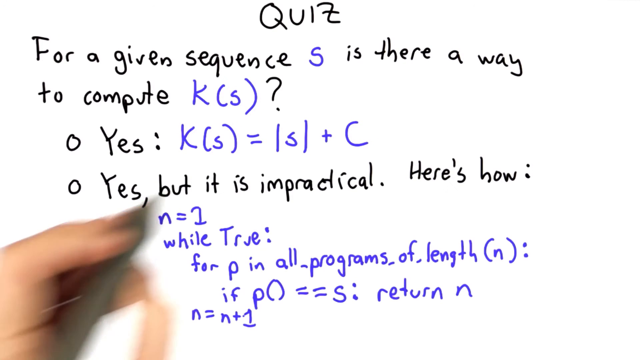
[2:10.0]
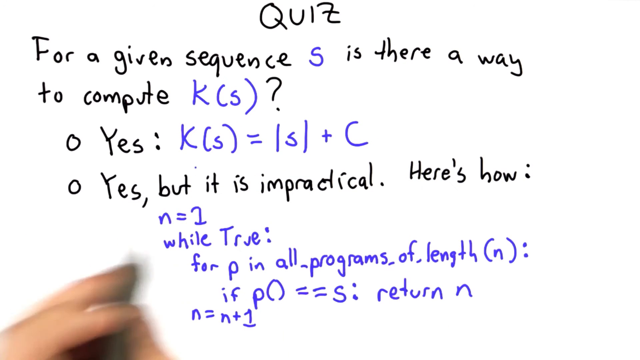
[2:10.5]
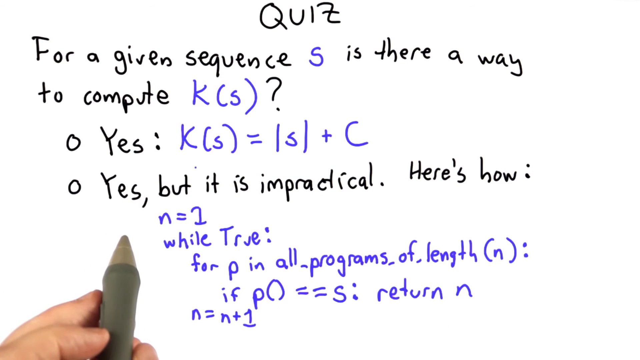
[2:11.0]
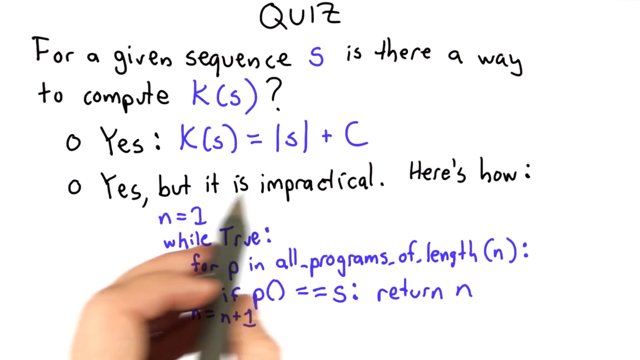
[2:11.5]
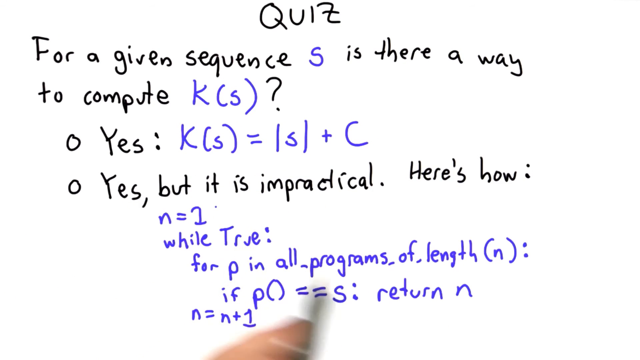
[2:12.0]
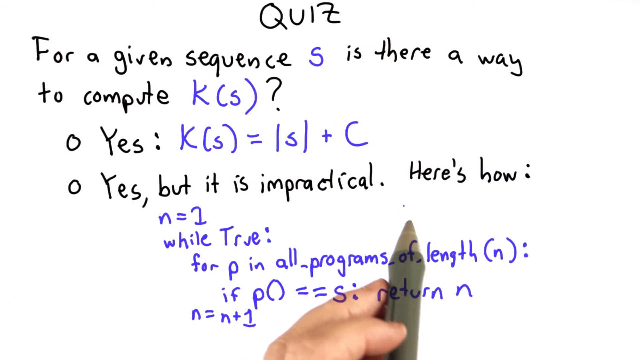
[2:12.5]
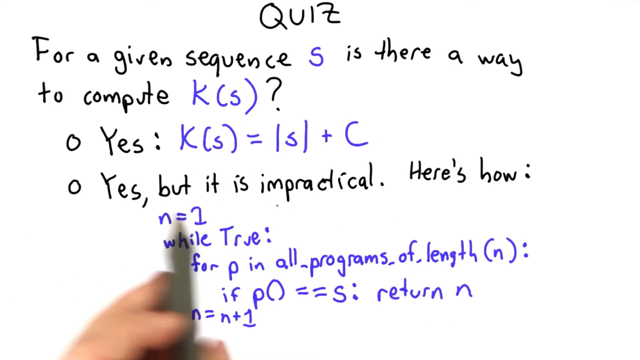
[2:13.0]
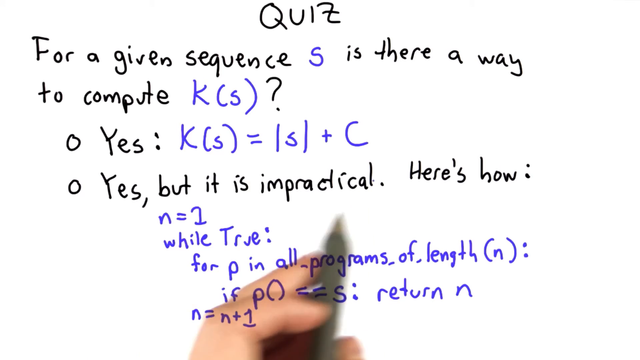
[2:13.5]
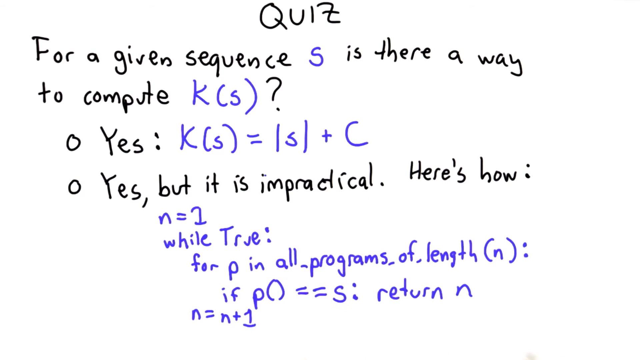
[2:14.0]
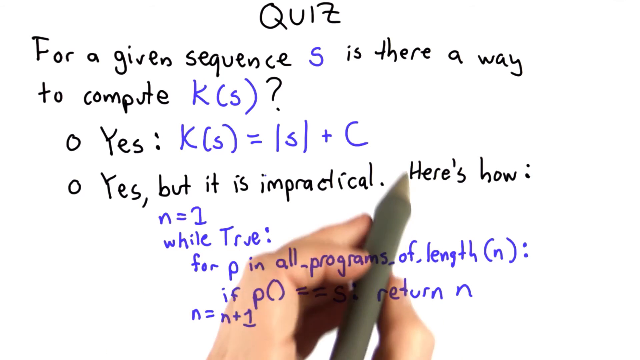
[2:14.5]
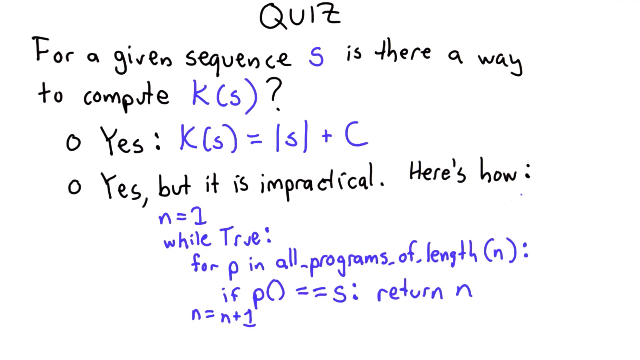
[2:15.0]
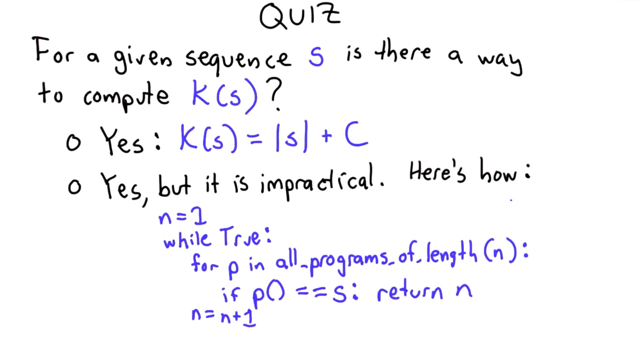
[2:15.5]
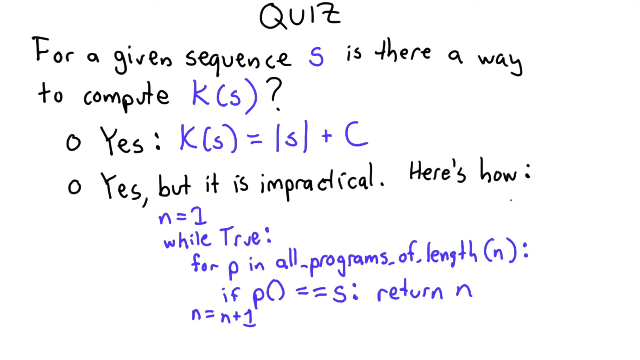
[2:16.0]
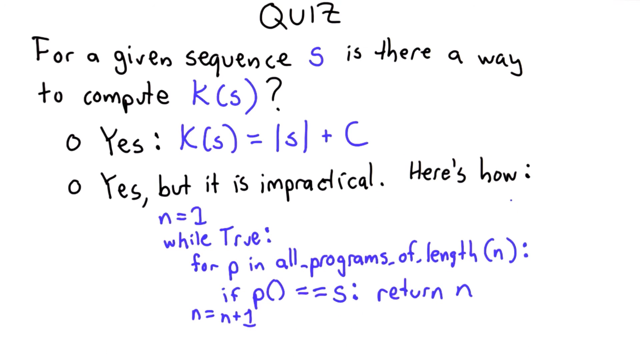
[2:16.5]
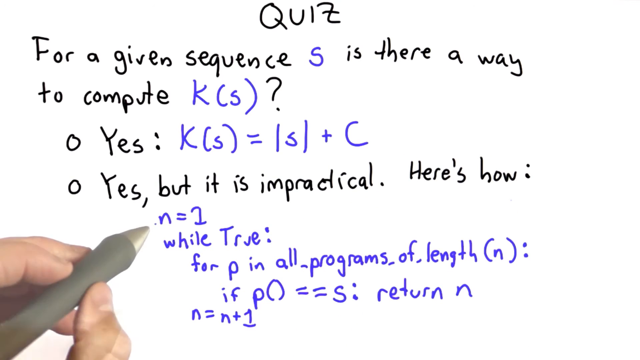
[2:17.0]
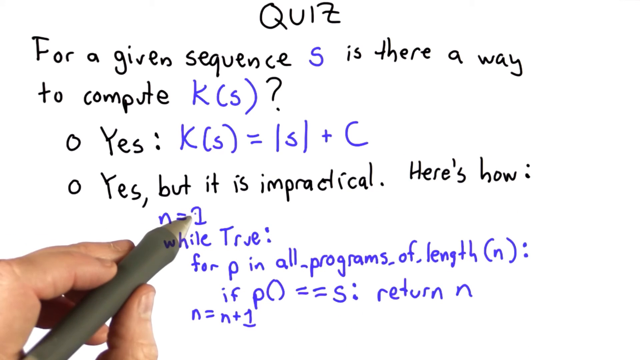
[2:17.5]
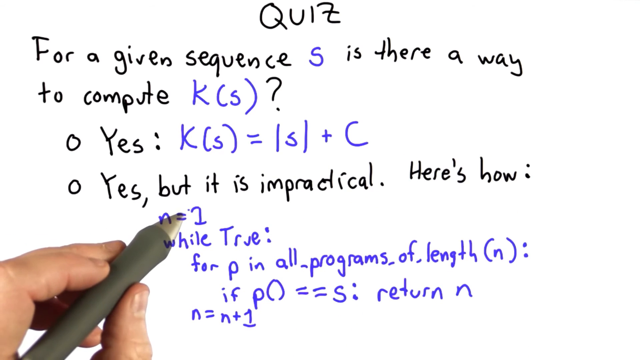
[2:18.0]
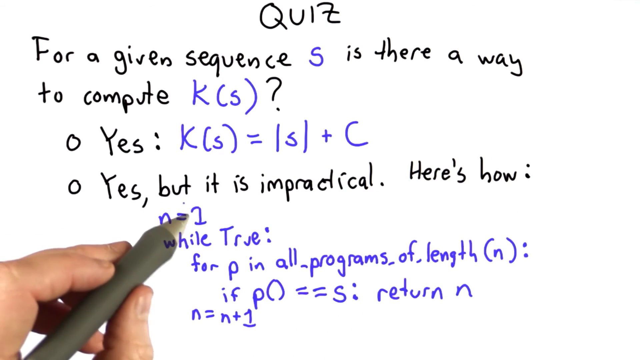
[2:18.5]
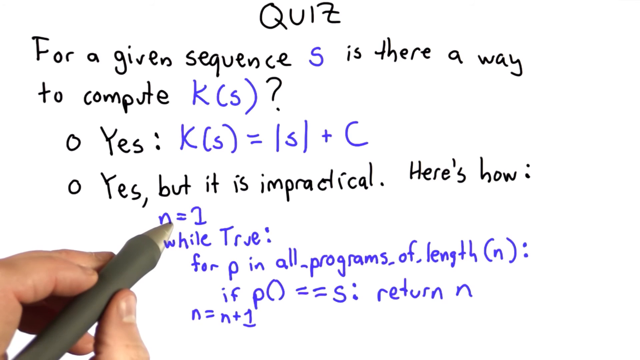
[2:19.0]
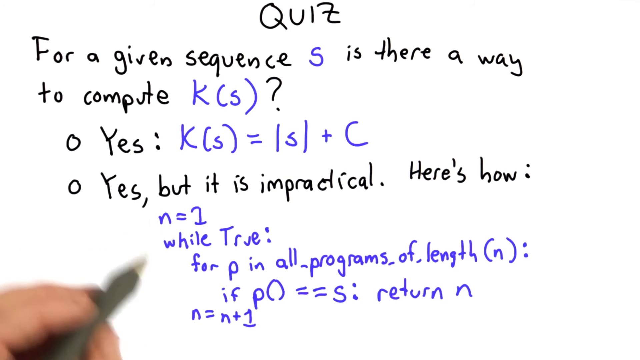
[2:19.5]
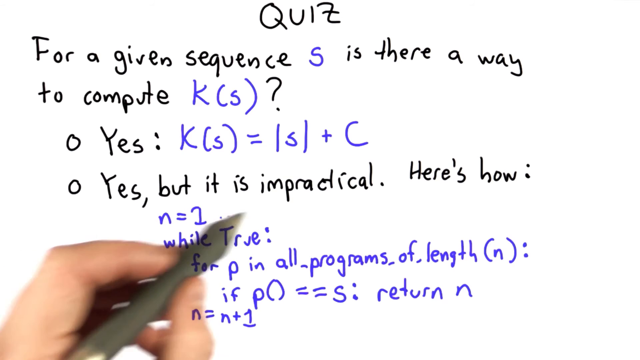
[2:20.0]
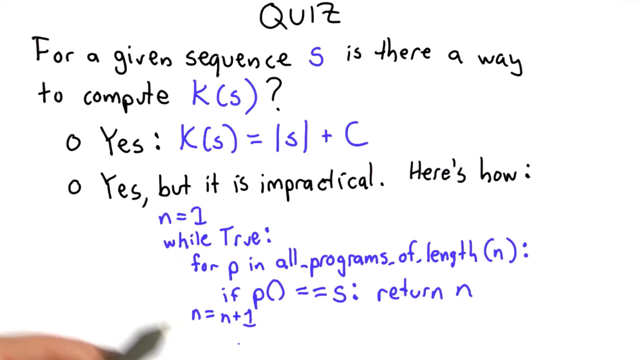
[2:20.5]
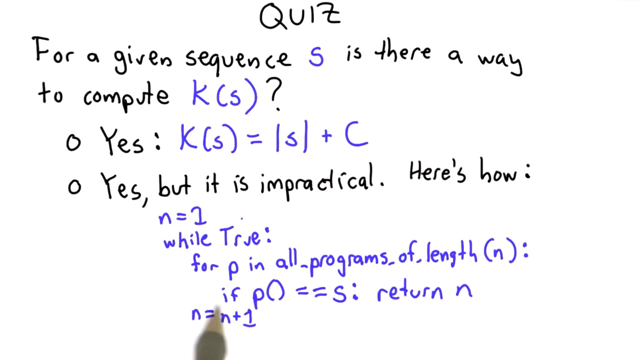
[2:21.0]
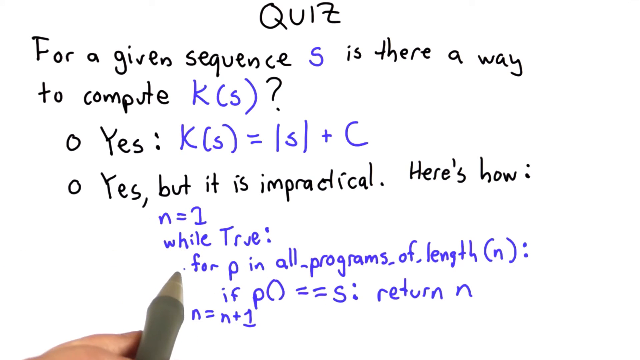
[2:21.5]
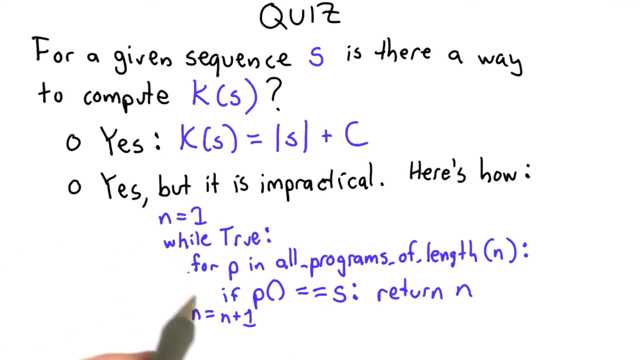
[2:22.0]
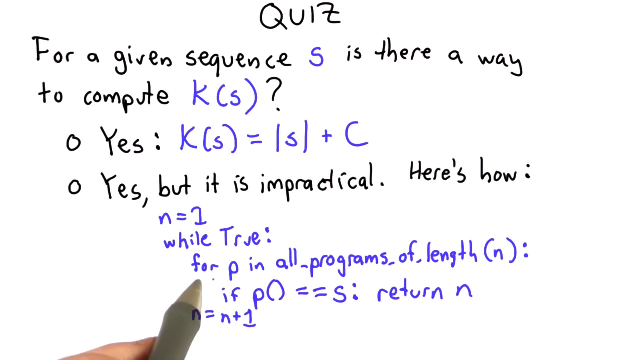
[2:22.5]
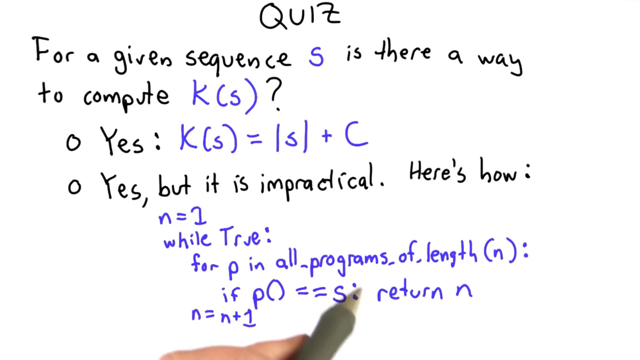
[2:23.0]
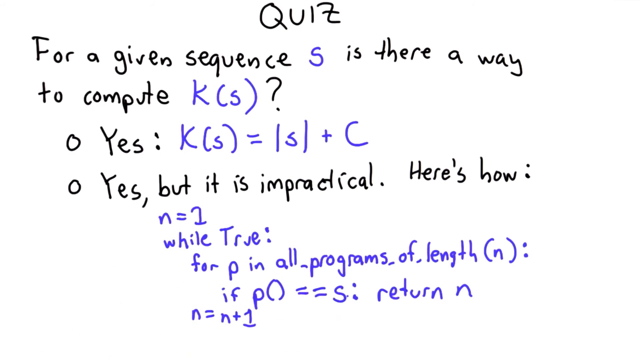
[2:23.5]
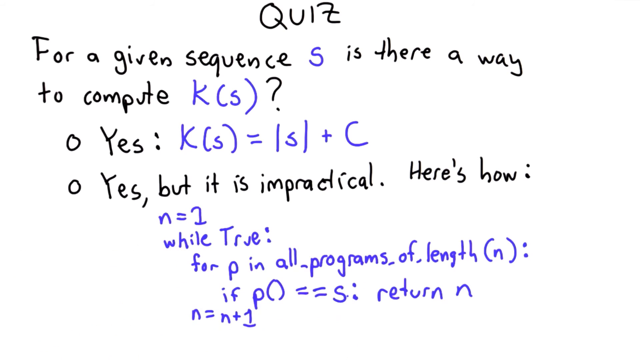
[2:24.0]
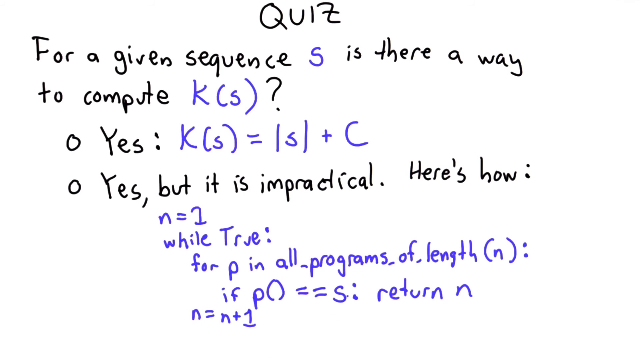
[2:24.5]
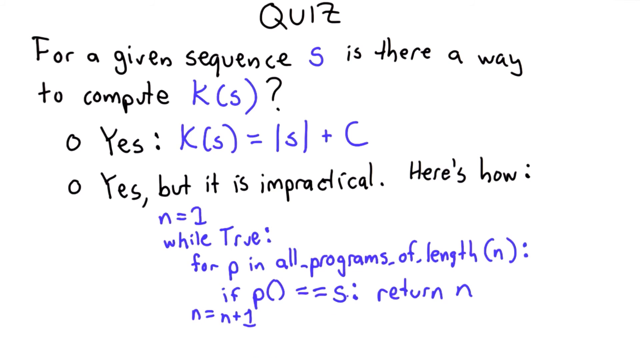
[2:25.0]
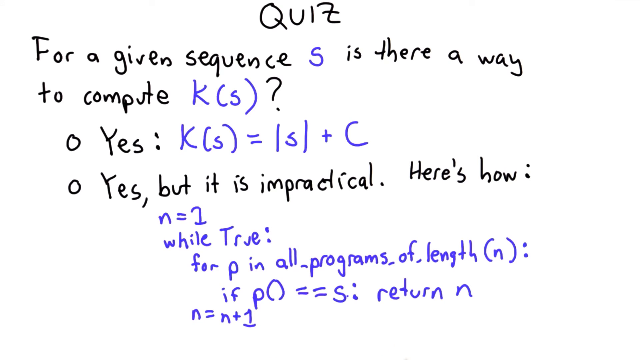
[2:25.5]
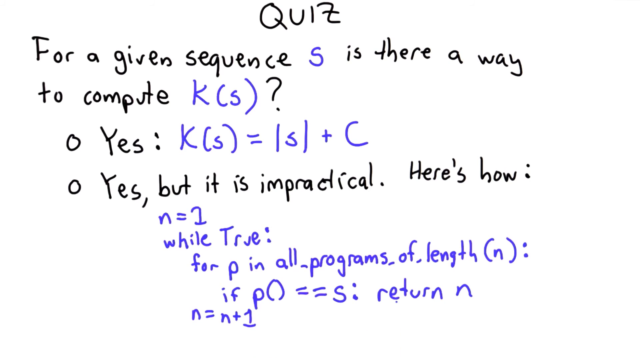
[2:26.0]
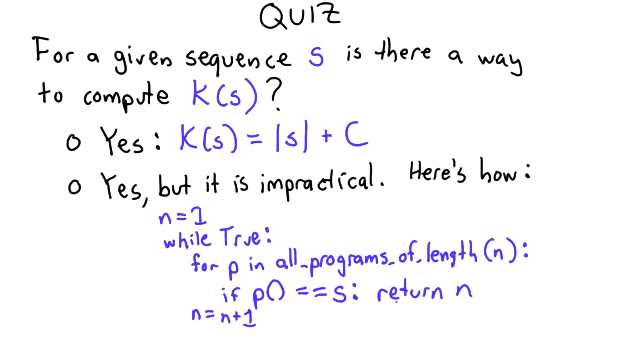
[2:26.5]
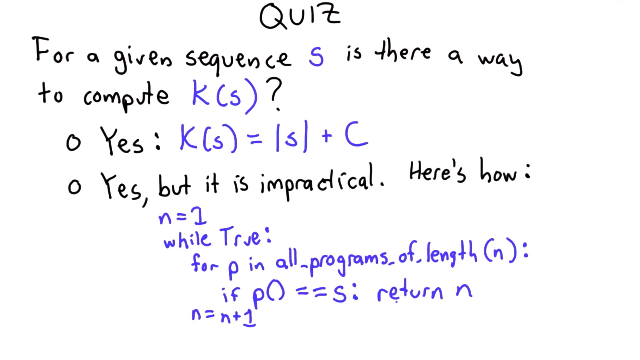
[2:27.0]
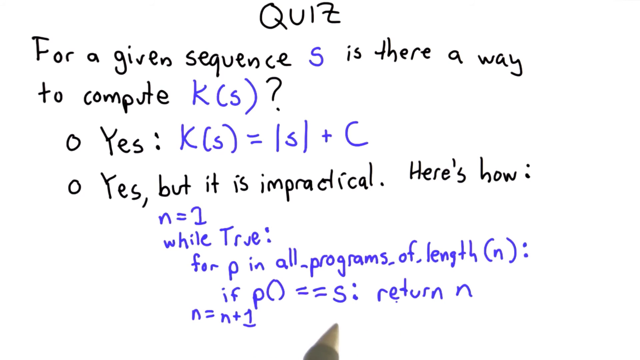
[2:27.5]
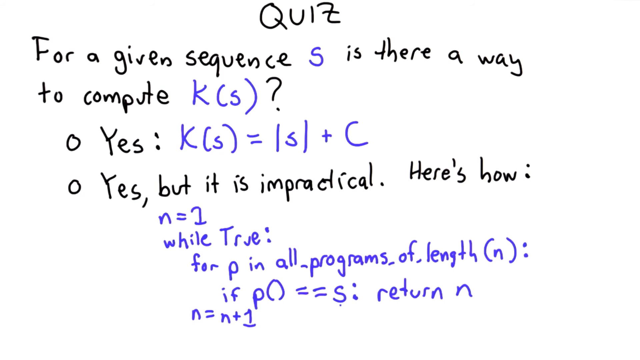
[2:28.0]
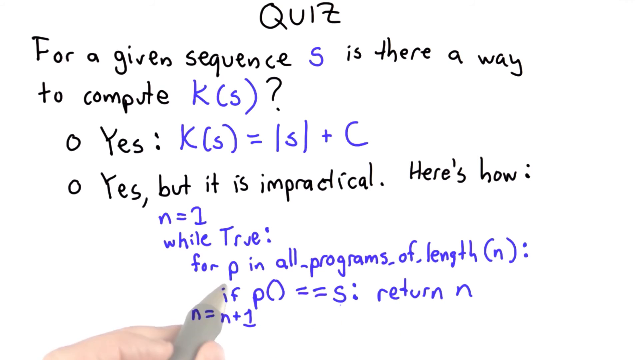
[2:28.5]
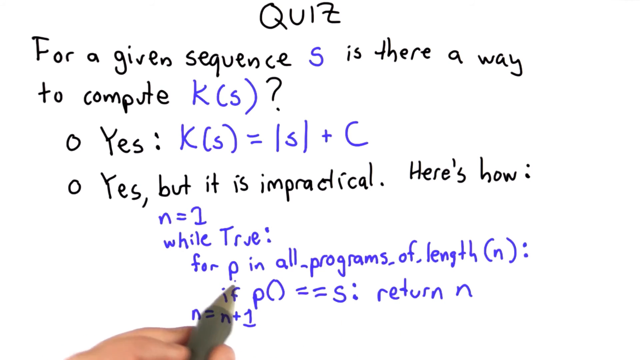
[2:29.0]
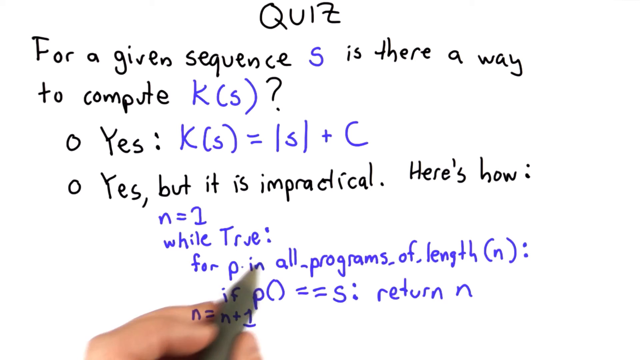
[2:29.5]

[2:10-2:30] The white screen shows the word "quiz" in black at the top middle. Underneath it says "for a given sequence S is there a way to compute K(s)?" Below that is written "yes K(s) equals s plus C," and then, in black, "yes, but it is impractical. Here's how." Underneath, written in blue, are the lines "n equals 1," "while true," "for p in all programs of length (n)," "if p equals equals s return n," and "n equals n plus 1." A left hand holding a gold-colored pen points out things on the screen, and wherever the pen moves, a small dot follows it on the screen.